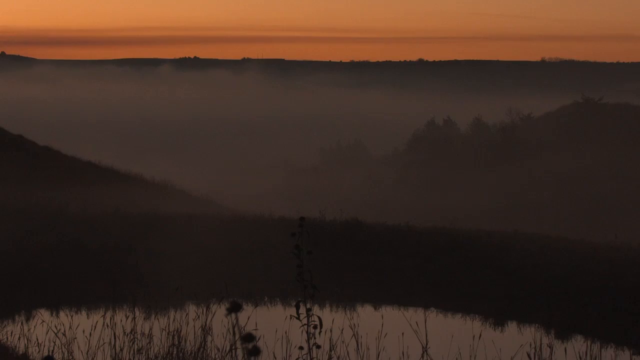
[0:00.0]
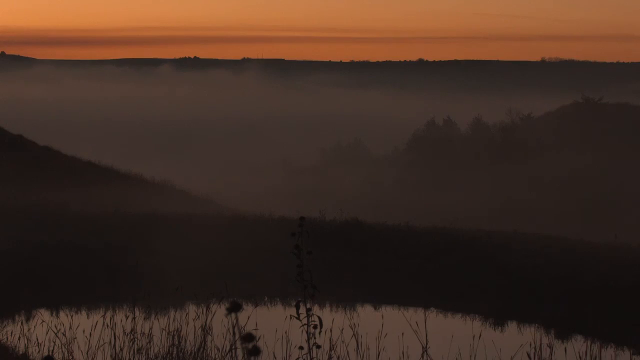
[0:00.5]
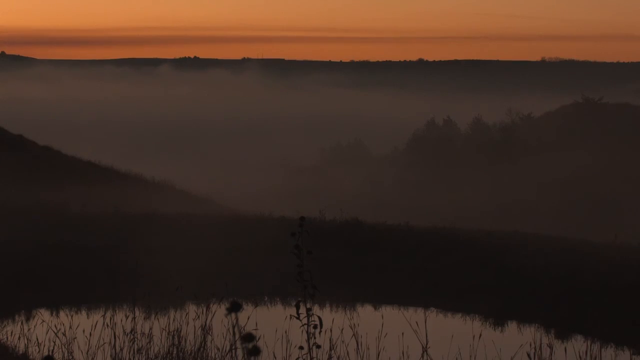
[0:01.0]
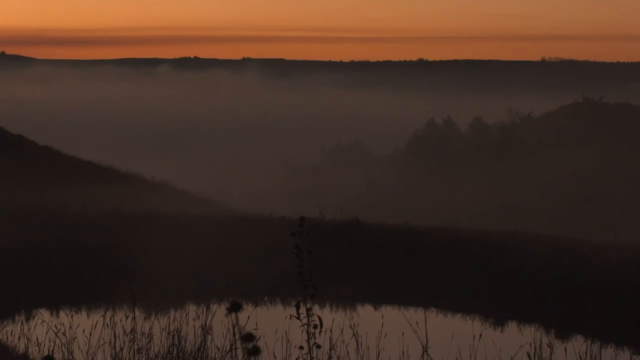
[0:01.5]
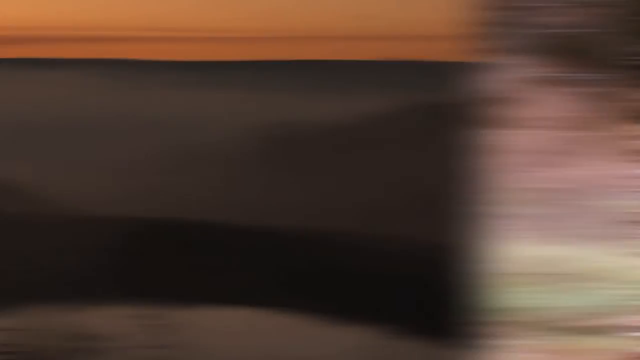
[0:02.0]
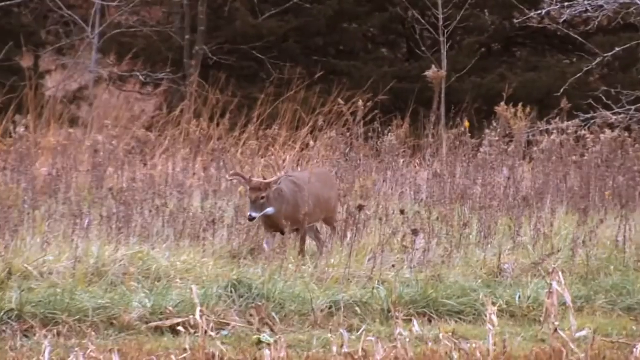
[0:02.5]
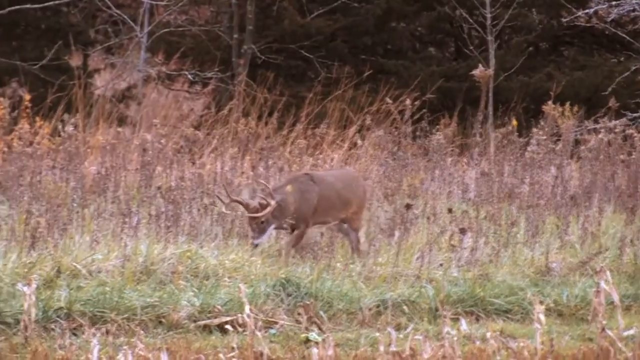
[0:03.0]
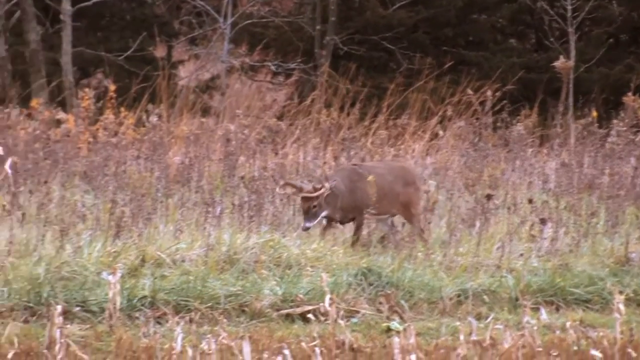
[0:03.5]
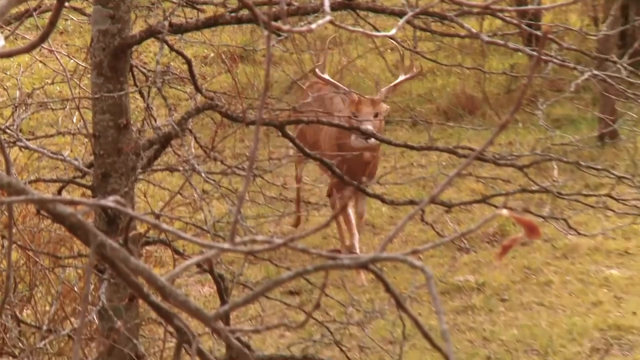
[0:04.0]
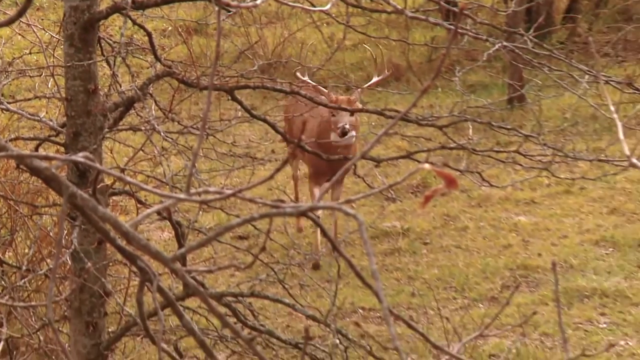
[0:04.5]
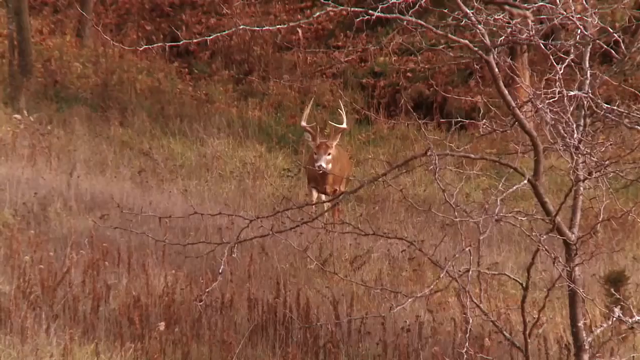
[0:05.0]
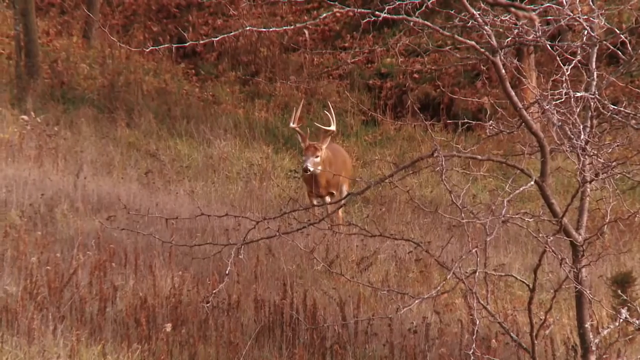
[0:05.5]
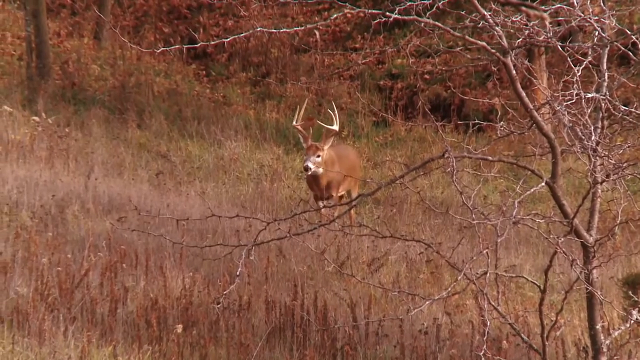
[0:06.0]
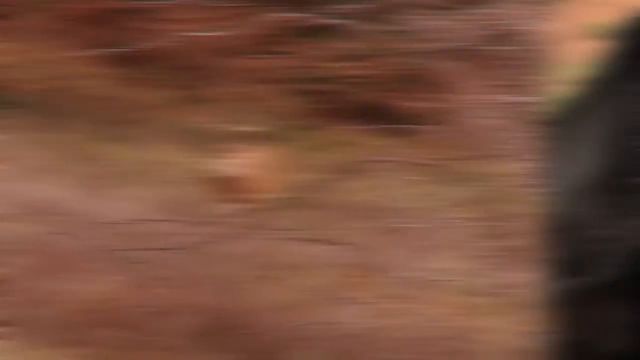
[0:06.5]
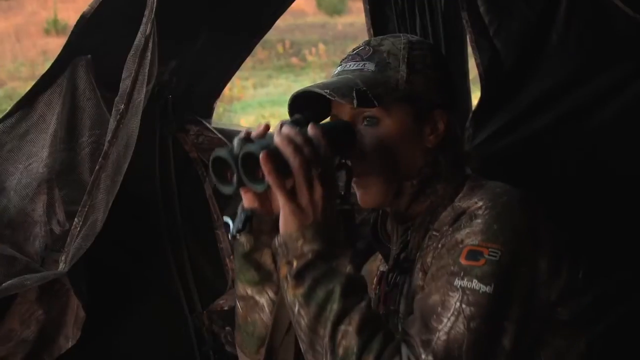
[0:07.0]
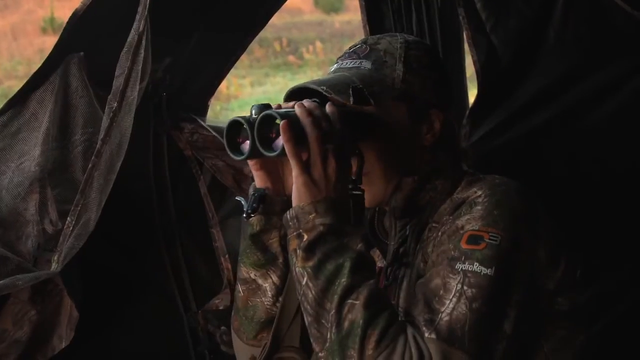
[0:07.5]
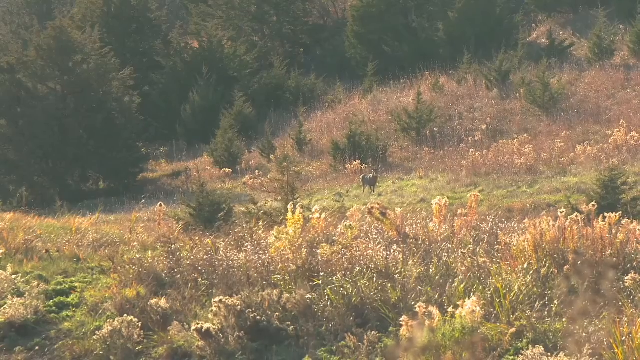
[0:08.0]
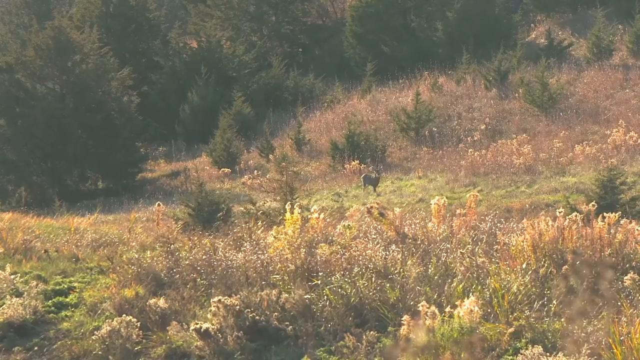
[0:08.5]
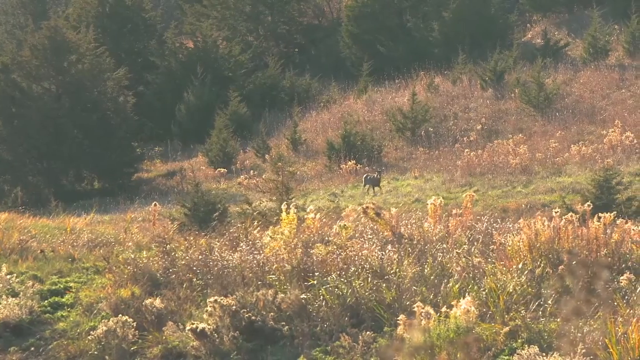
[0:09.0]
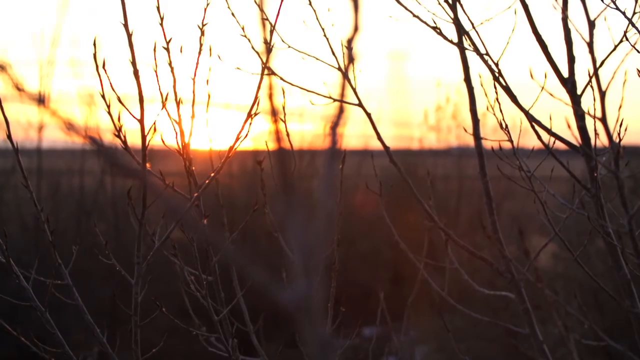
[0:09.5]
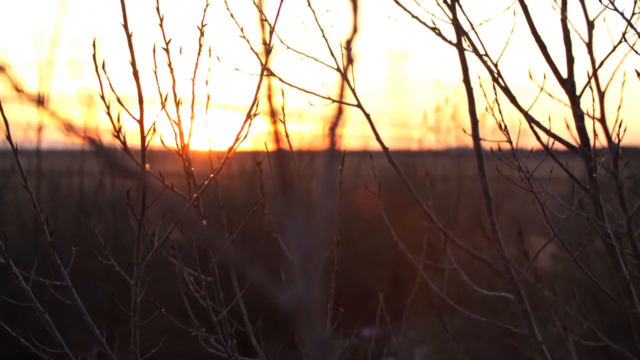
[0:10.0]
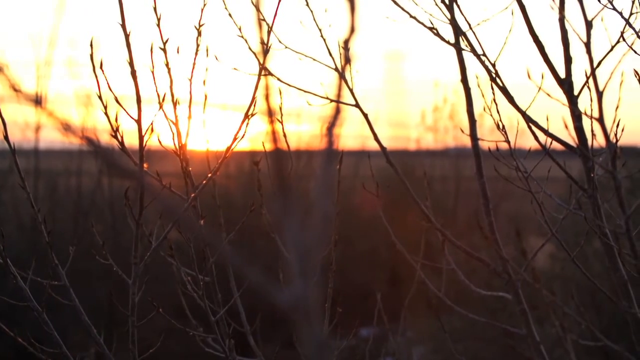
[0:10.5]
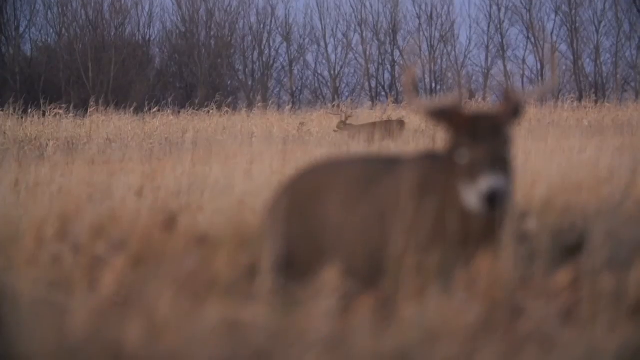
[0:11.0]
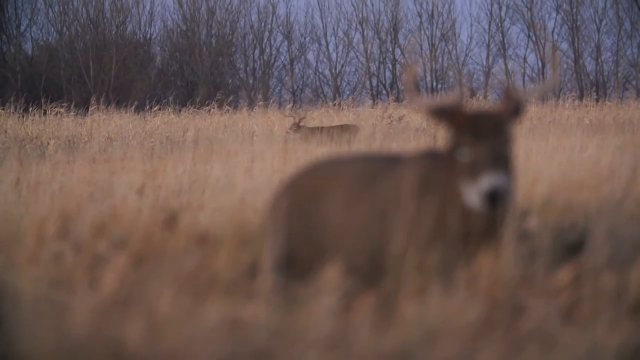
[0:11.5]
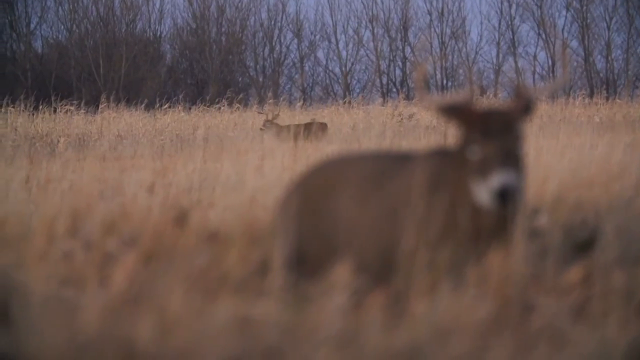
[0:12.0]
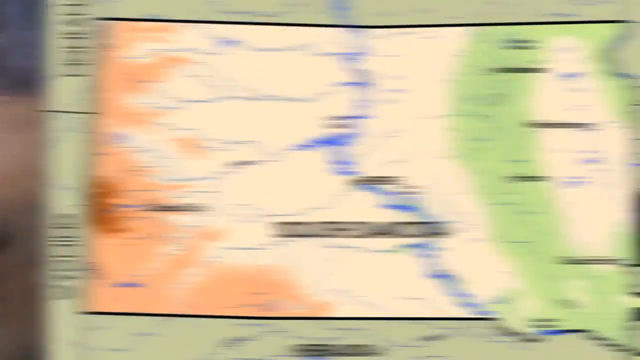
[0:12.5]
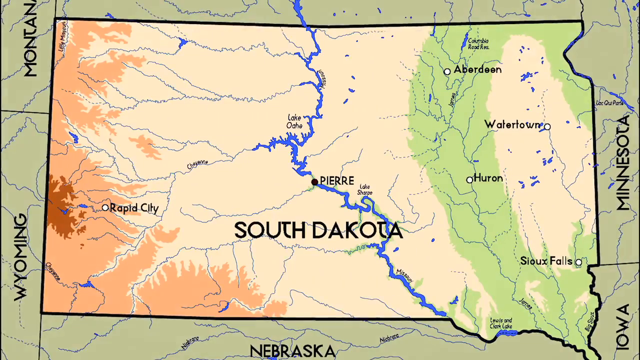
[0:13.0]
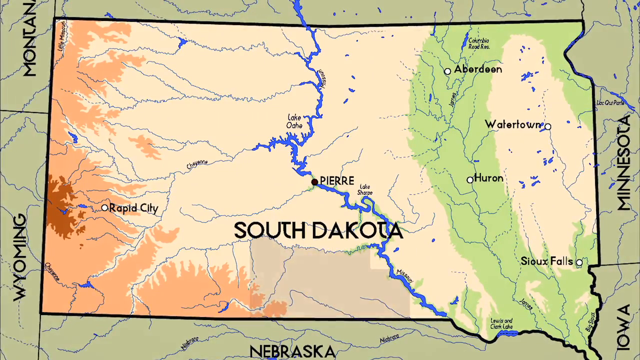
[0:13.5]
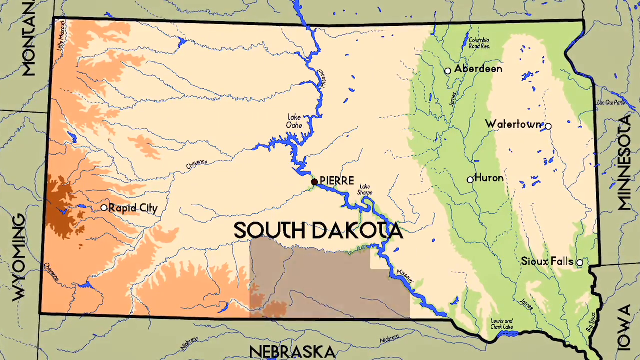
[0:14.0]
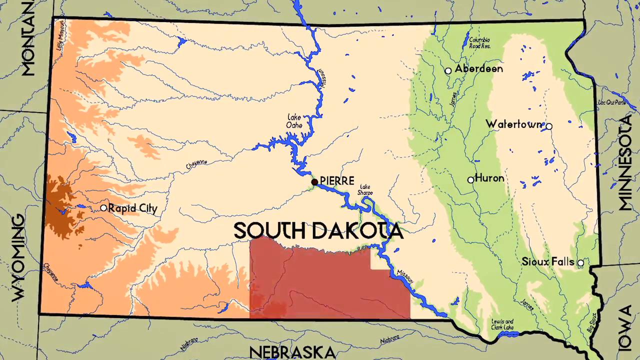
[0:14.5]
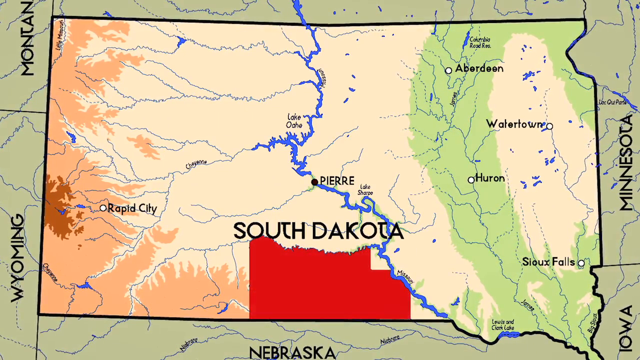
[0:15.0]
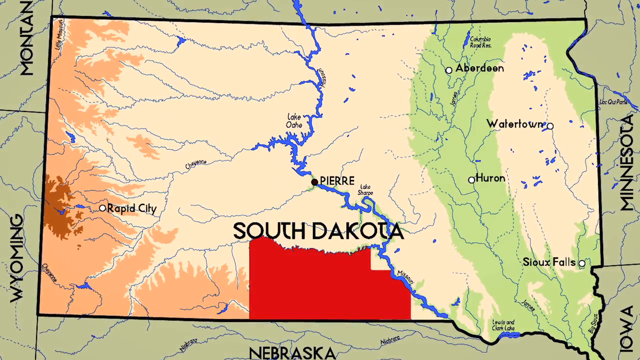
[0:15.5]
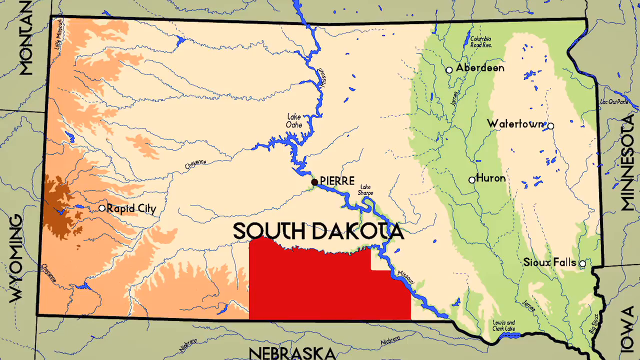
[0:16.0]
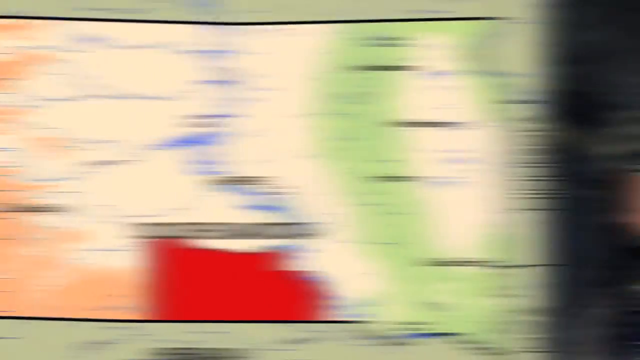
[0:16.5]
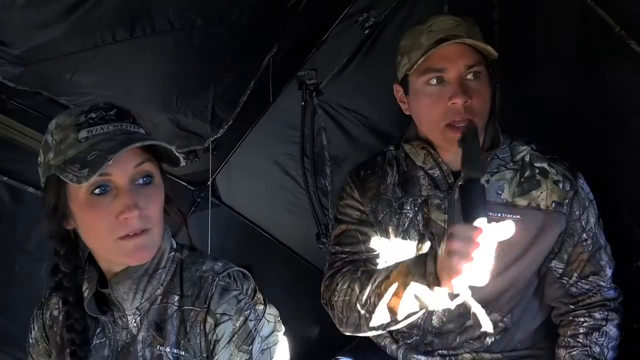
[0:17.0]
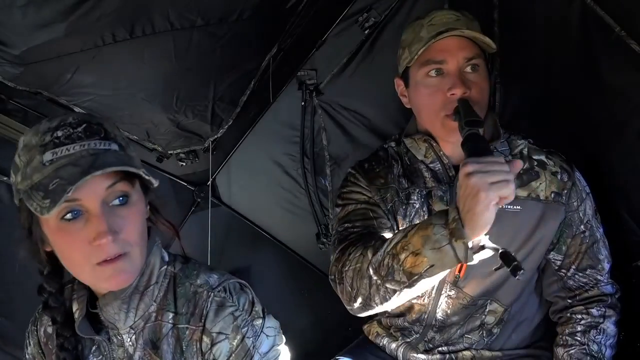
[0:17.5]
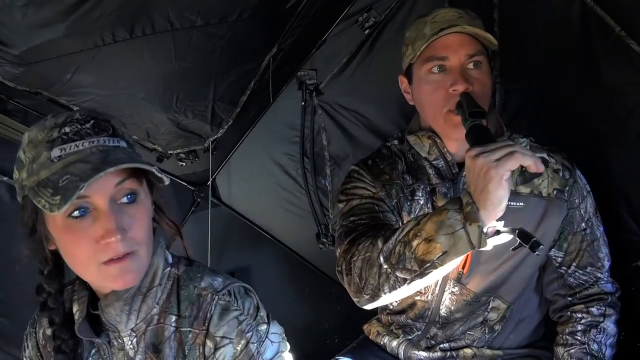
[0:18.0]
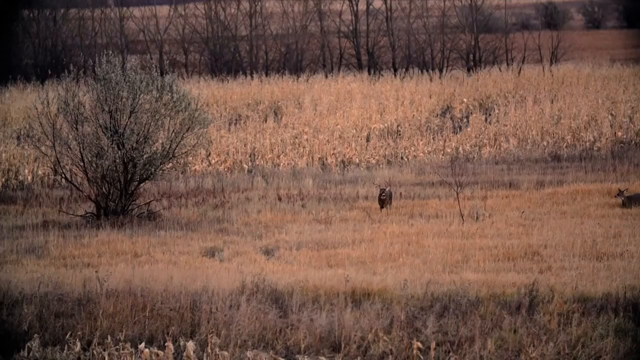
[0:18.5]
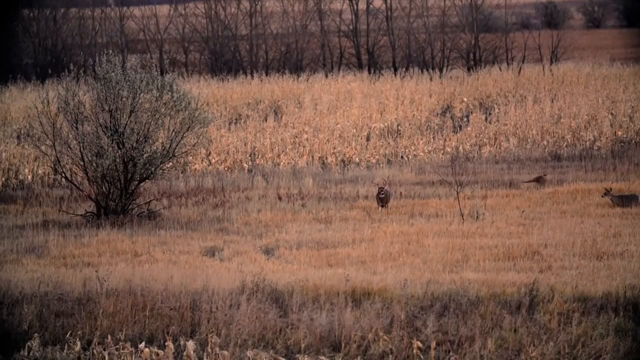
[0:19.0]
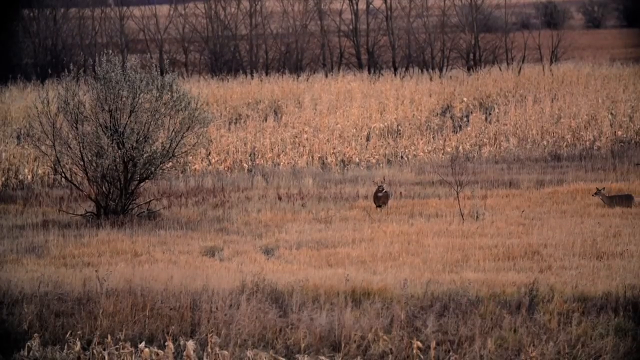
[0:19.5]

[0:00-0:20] The video opens on an outdoor landscape. A hunter sitting in a tent slowly raises binoculars to his eyes, and the video cuts to his view through the binoculars. It then cuts to shots of deer walking through fields from different views, followed by an image of a sunrise beyond close-up images of branches. The video cuts to deer in a field: one stands still while the other walks across the field in the background. A map of South Dakota appears, and a red area appears at the bottom of the map, possibly indicating where the hunters are. Two hunters dressed in camo sit inside a tent; the female hunter looks out into the distance while the male hunter uses some kind of animal call. The video then cuts back to the deer in the field.